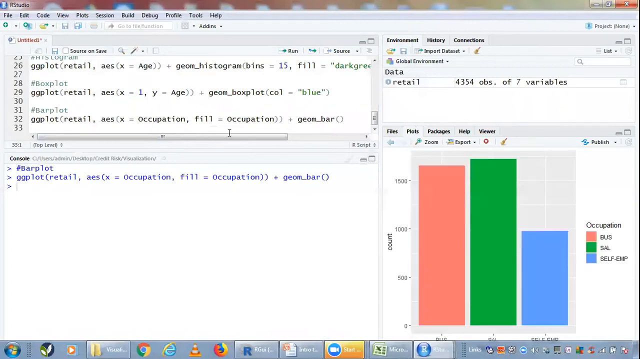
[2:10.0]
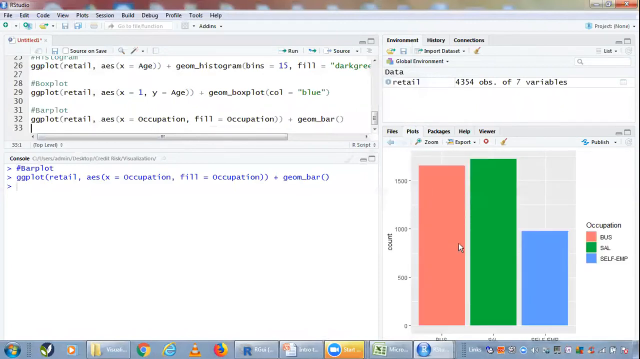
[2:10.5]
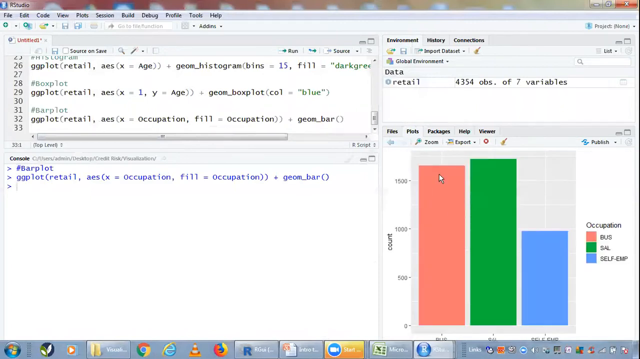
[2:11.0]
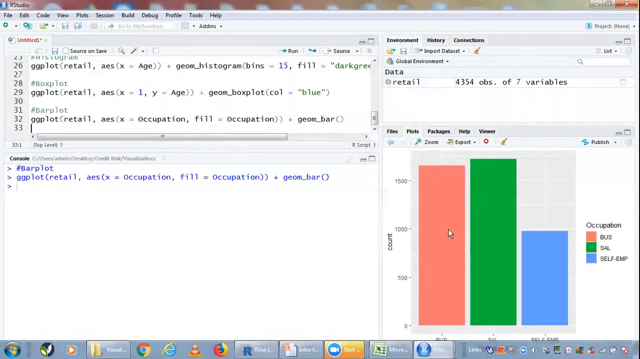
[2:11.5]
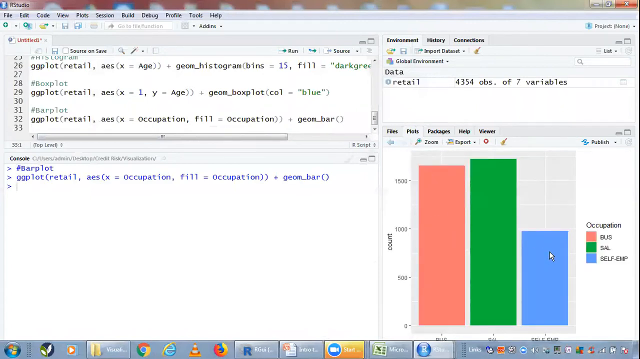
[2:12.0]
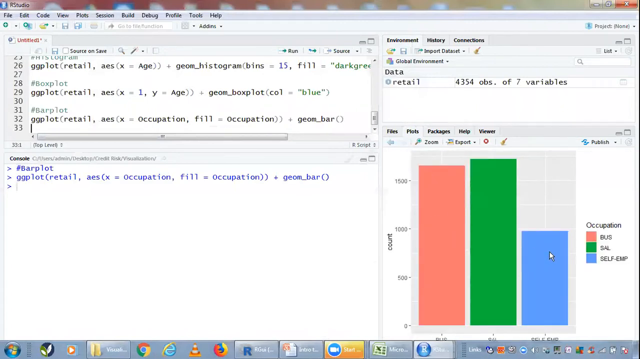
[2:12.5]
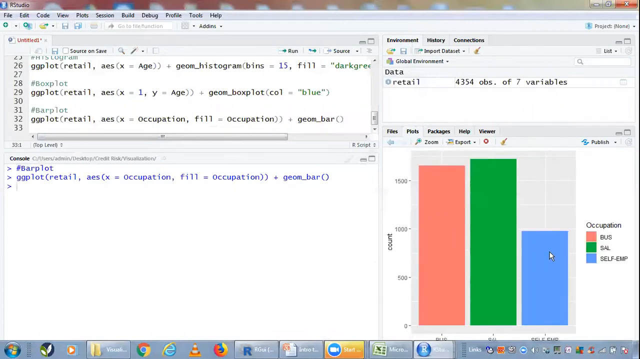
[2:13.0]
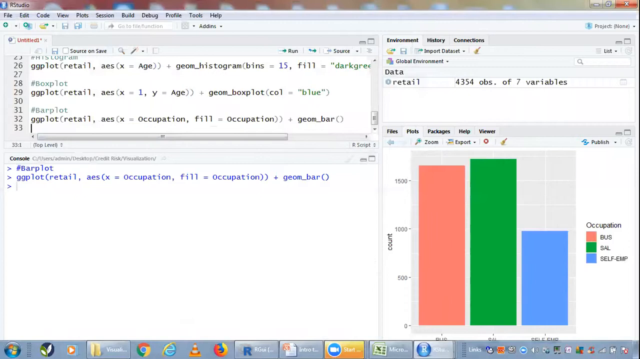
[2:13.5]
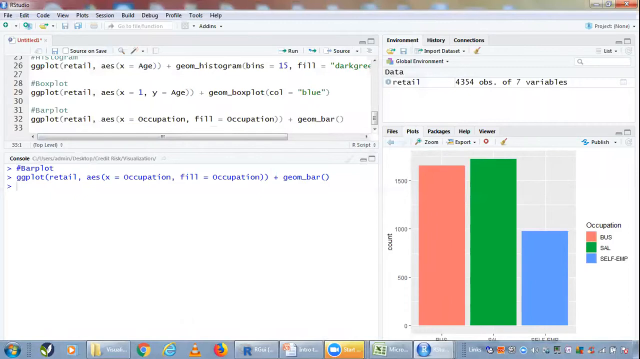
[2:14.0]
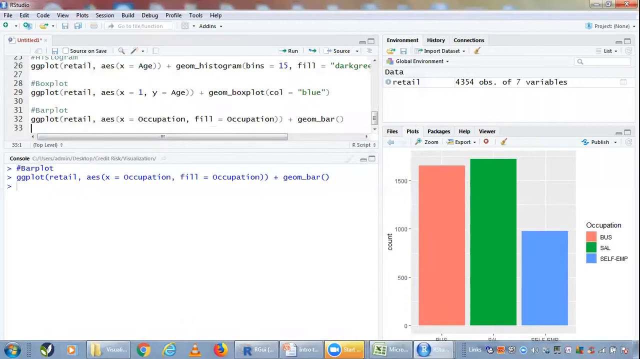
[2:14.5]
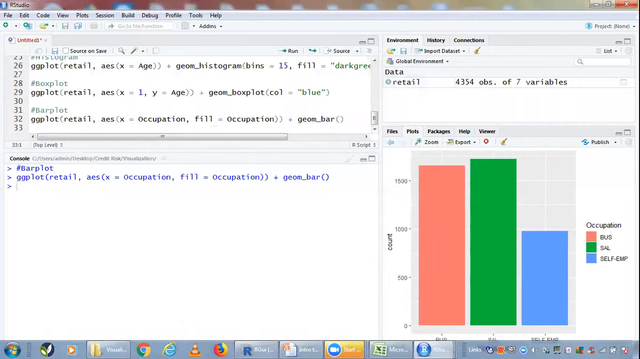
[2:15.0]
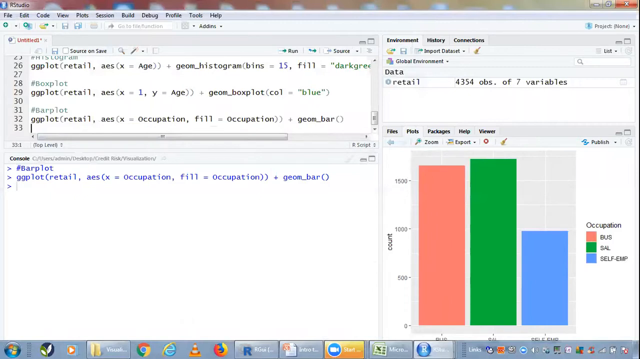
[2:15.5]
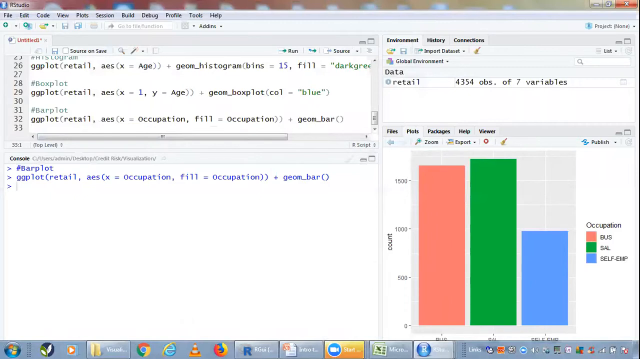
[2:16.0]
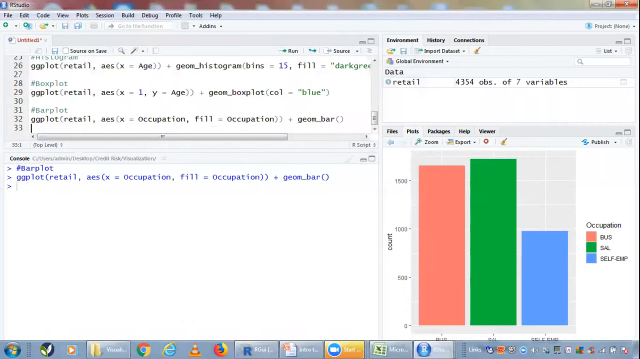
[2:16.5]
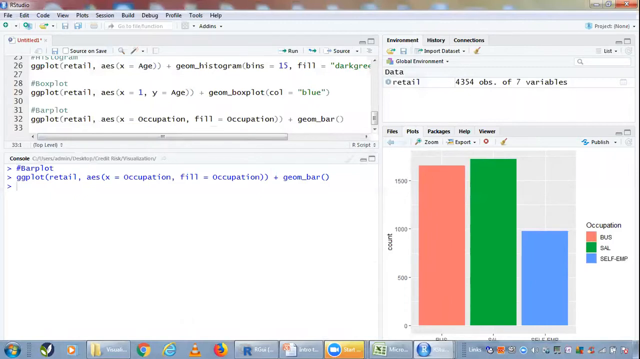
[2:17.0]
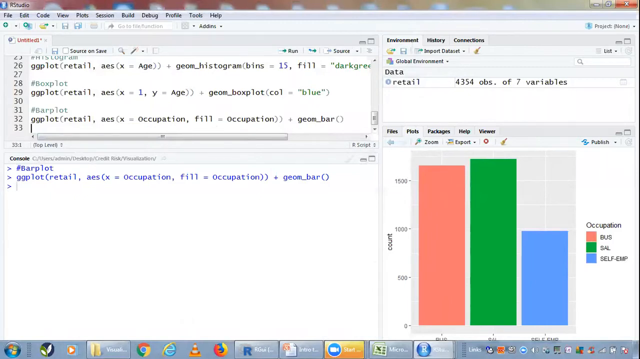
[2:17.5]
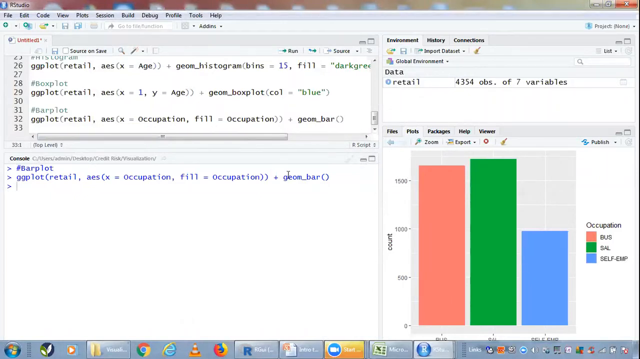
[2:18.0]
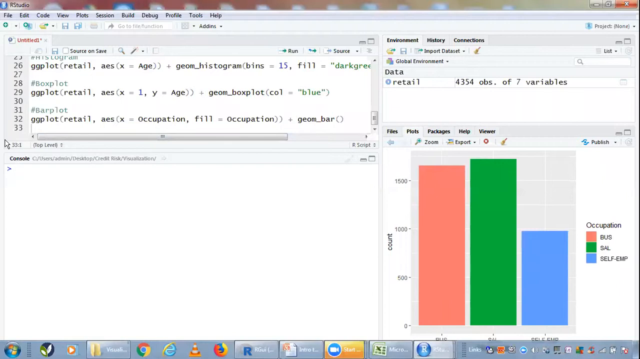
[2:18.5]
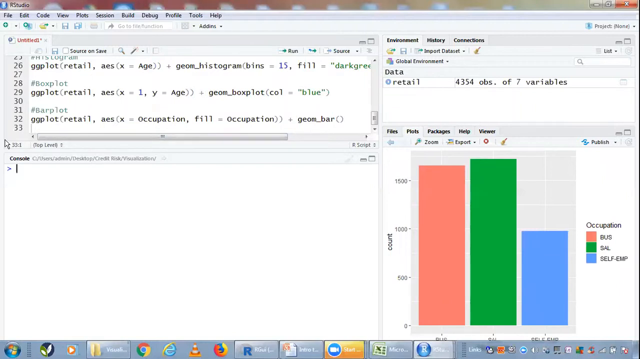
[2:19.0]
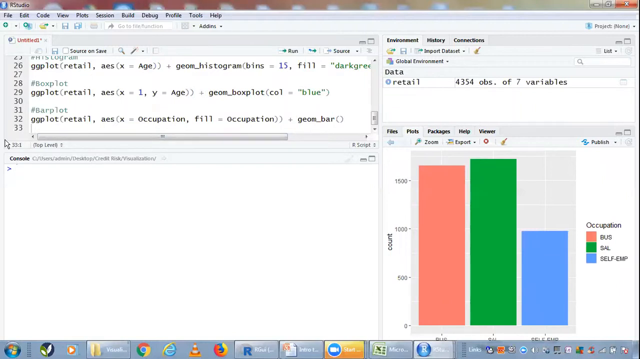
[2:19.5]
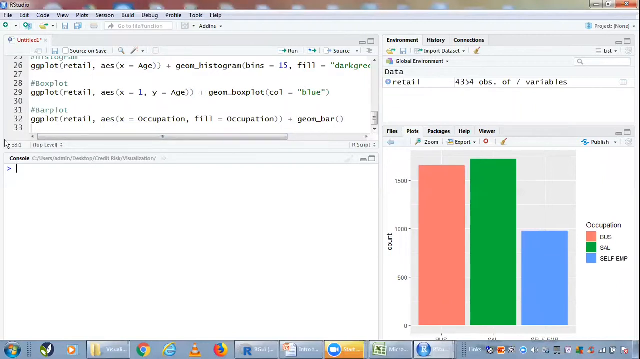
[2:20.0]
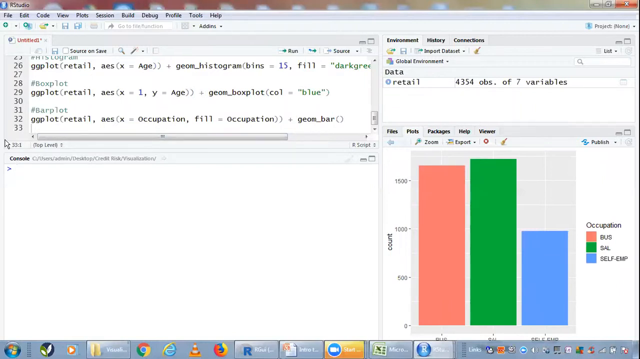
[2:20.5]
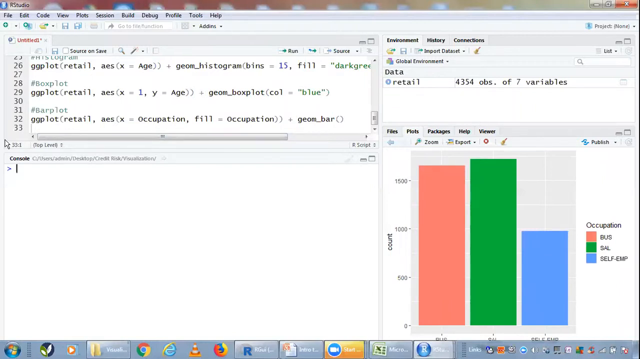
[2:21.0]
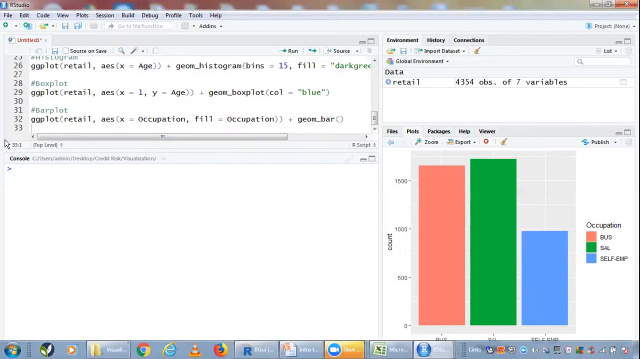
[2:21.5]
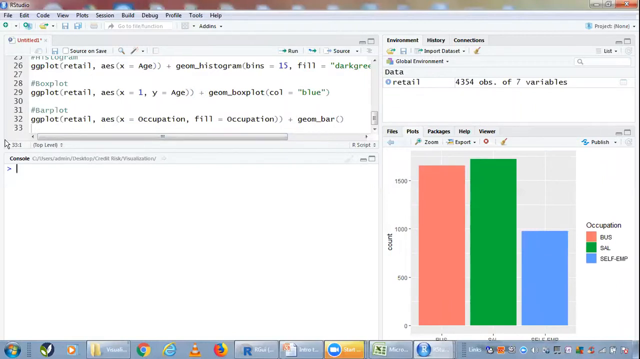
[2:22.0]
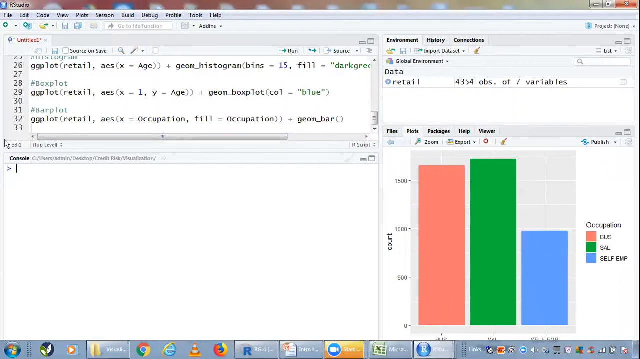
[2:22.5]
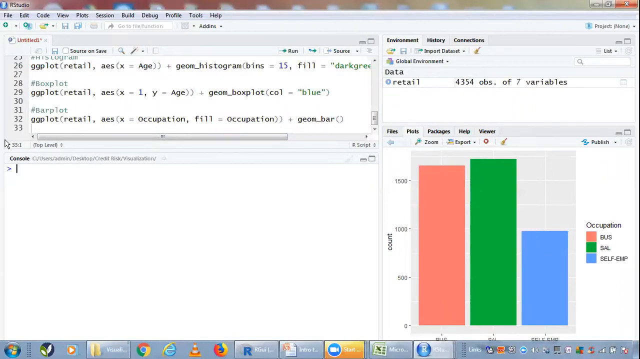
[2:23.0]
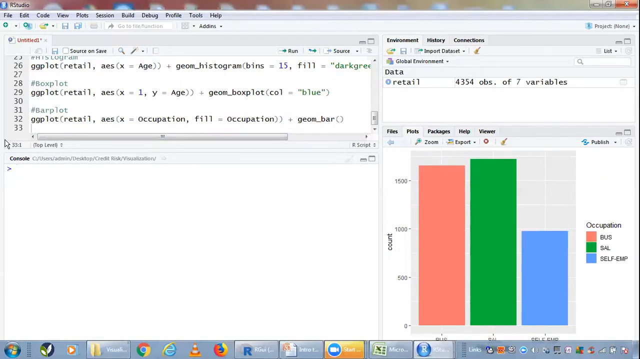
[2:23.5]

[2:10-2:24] The bar graph in the plots panel shows its changed colors after the text was added to line 32 in the Untitled panel. The console panel in the bottom left corner reflects the same last line of code: "ggplot(retail, aes(x = occupation, fill = occupation, + geom_bar())". This last prompt seems to have changed the BUS bar to a salmon pink color, the SAL bar to green, and the SELF-EMP bar to light blue. The environment panel in the top right corner seems to have remained unchanged throughout the video, showing one line of data that says "retail 4354 obs of seven variables".